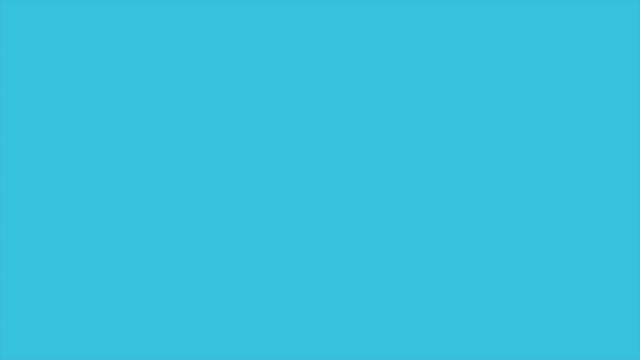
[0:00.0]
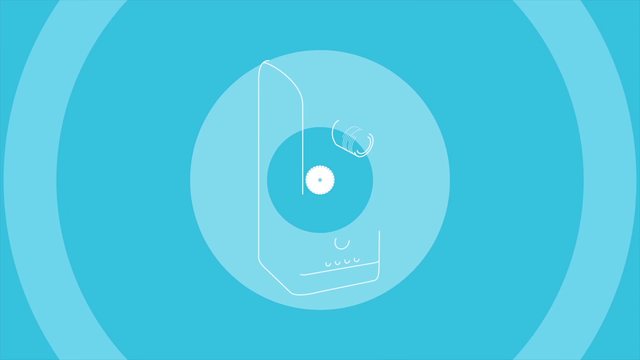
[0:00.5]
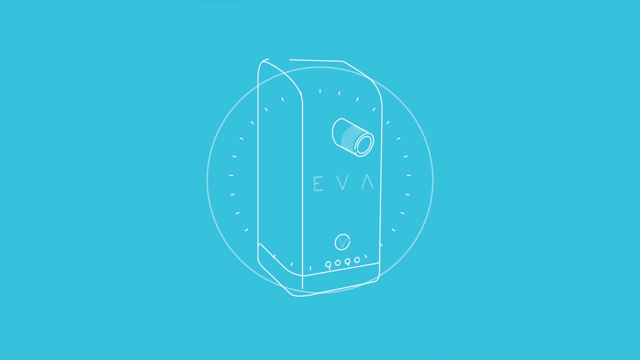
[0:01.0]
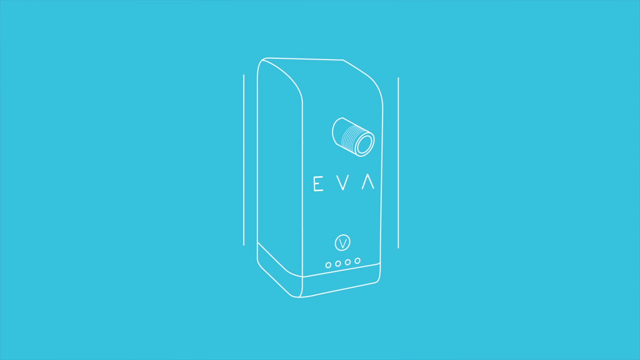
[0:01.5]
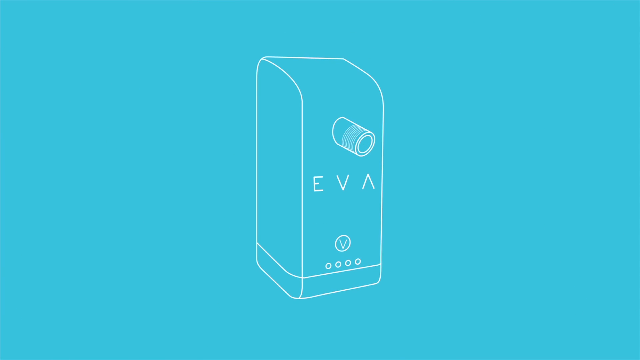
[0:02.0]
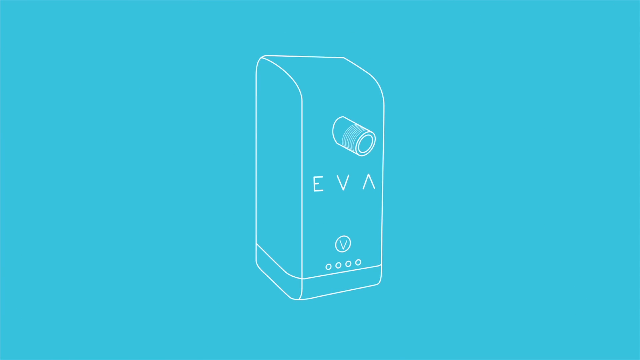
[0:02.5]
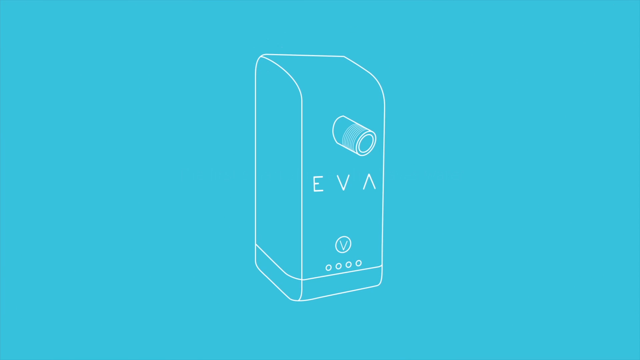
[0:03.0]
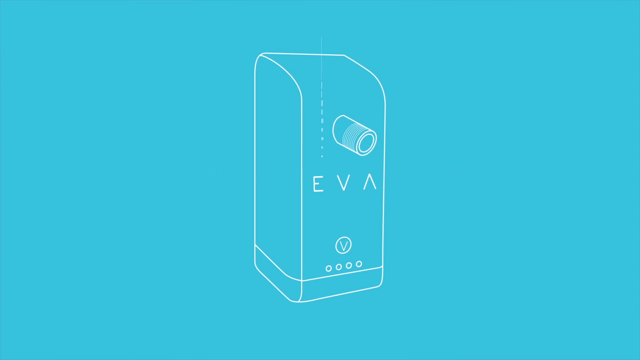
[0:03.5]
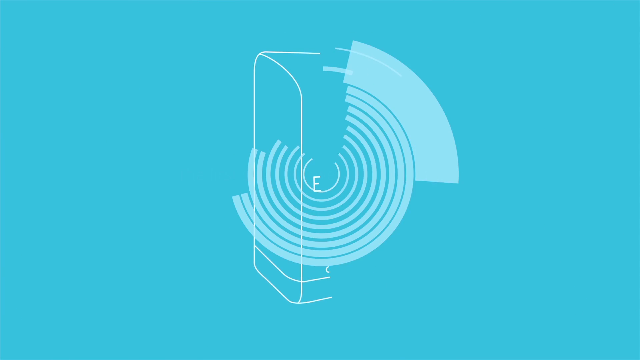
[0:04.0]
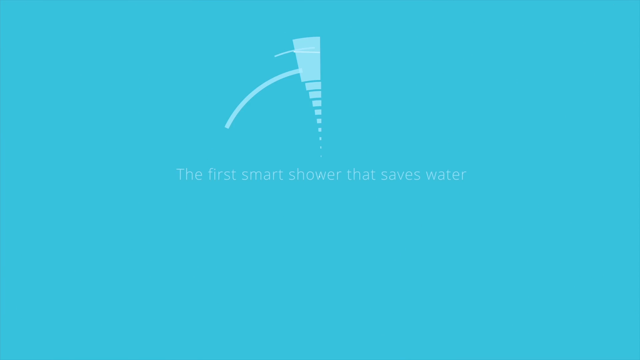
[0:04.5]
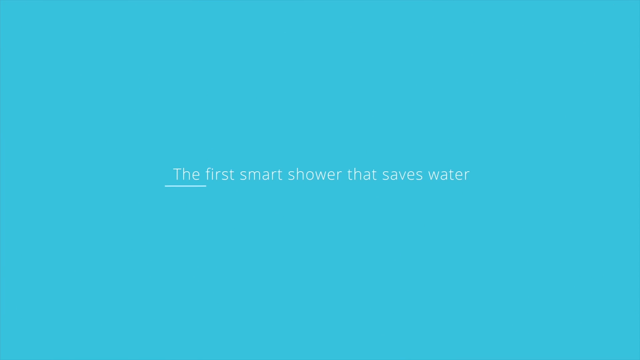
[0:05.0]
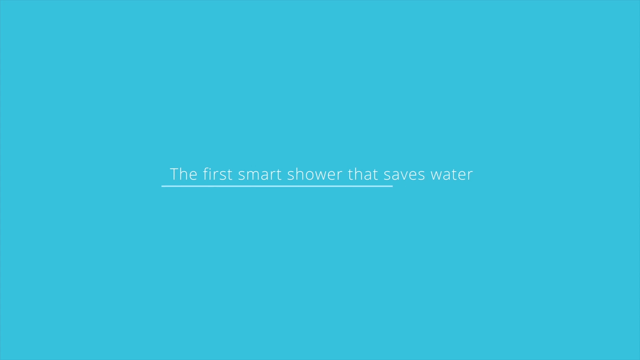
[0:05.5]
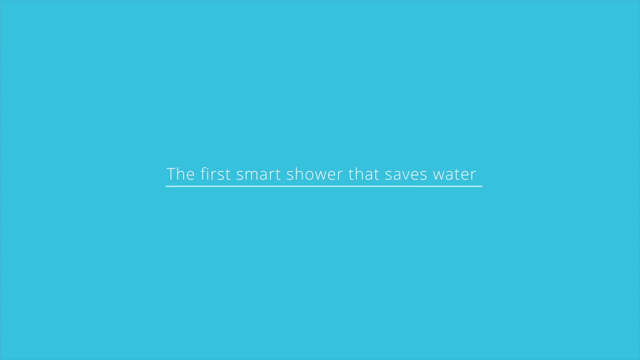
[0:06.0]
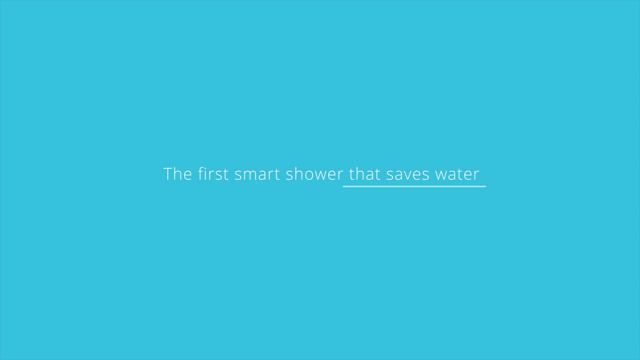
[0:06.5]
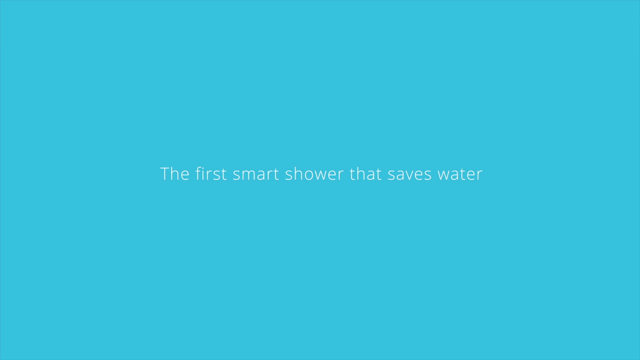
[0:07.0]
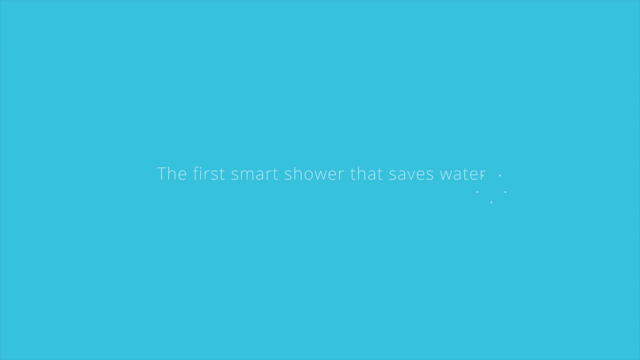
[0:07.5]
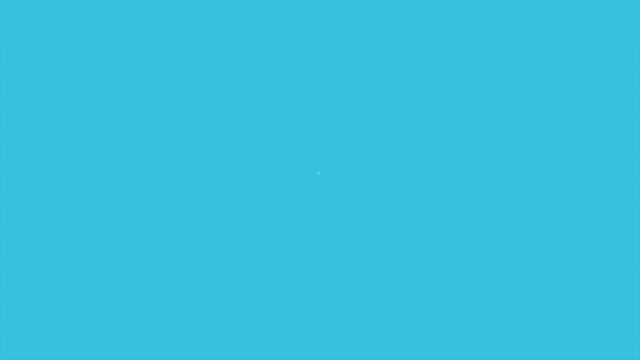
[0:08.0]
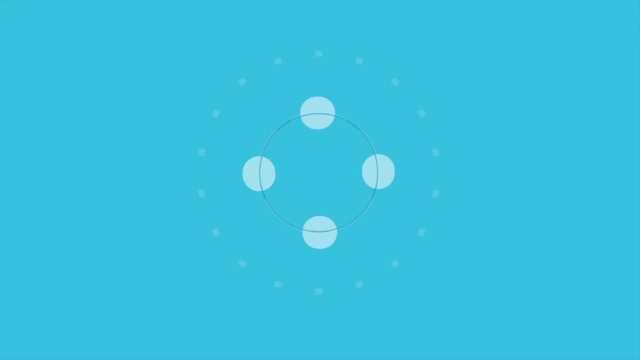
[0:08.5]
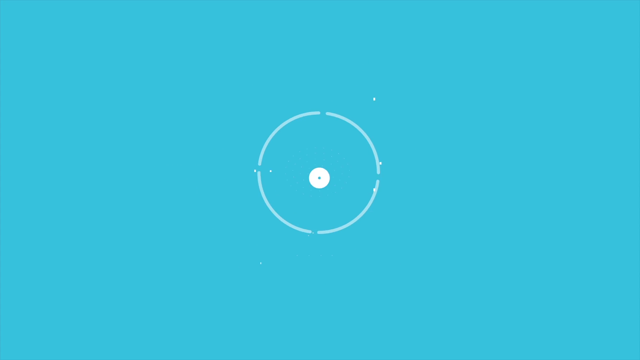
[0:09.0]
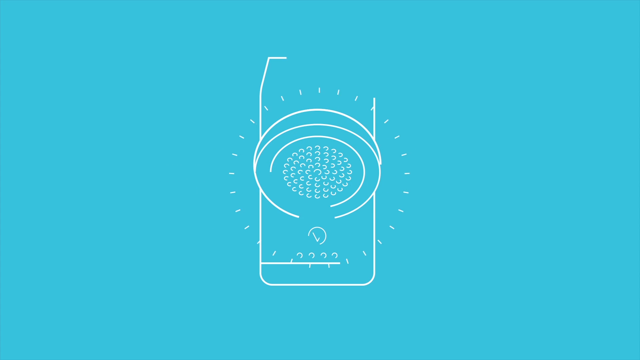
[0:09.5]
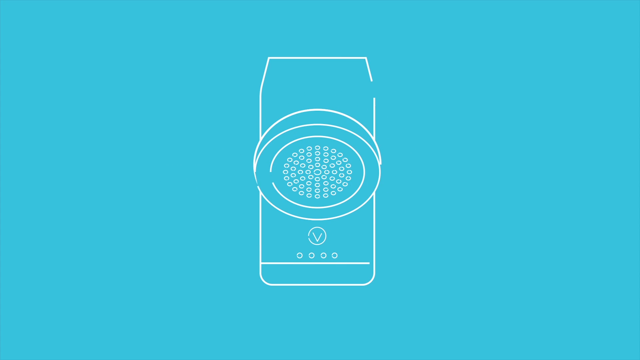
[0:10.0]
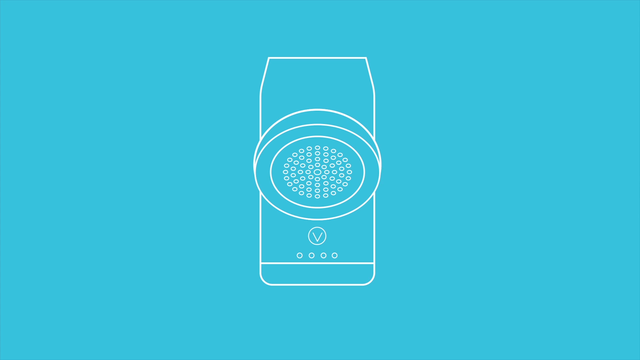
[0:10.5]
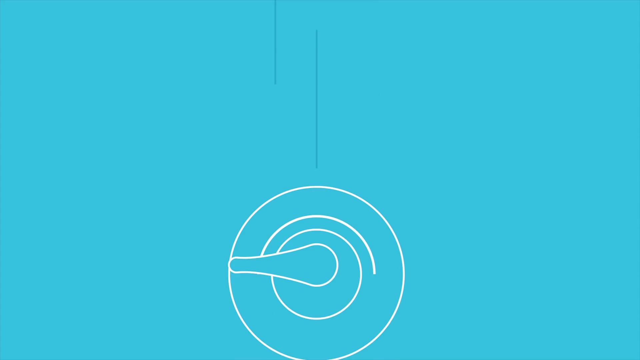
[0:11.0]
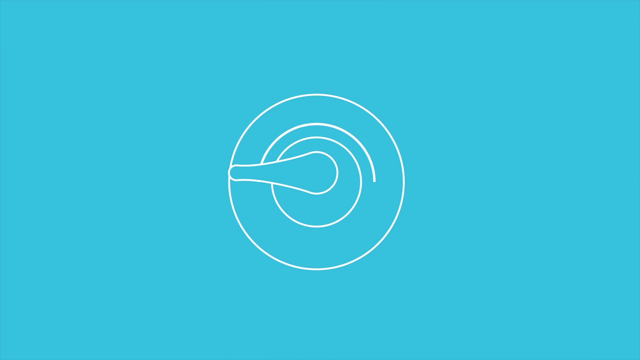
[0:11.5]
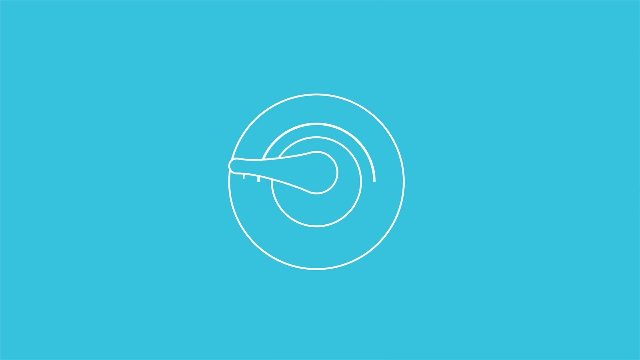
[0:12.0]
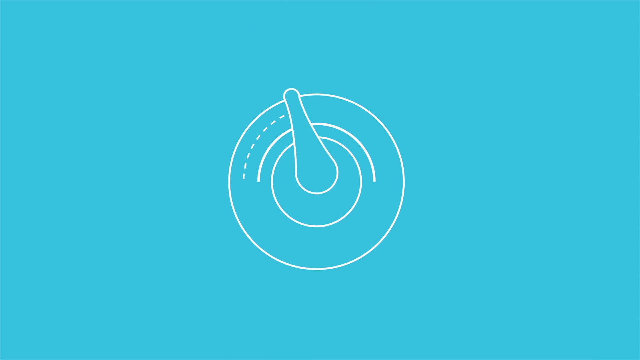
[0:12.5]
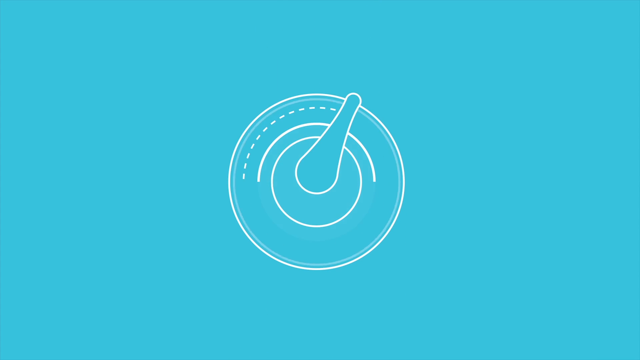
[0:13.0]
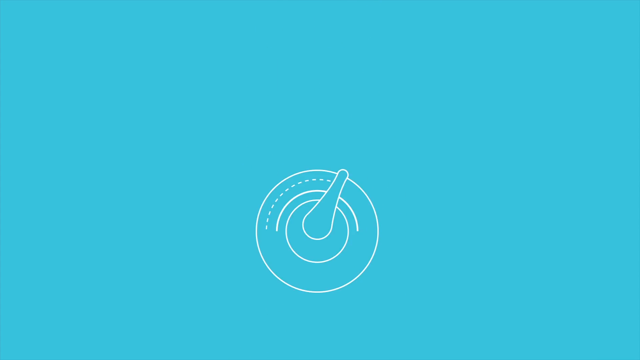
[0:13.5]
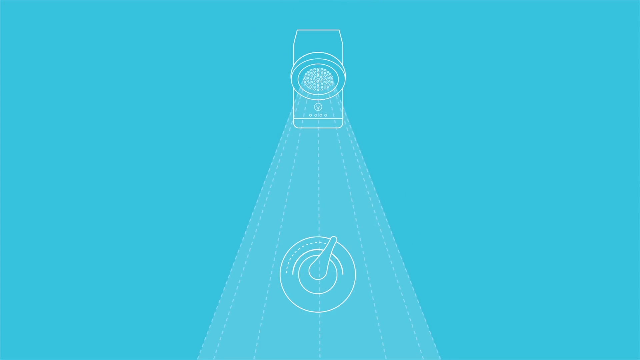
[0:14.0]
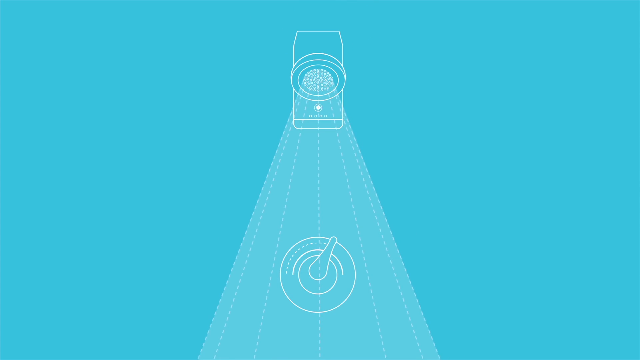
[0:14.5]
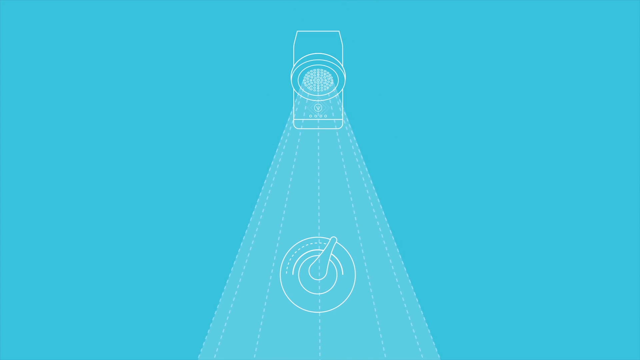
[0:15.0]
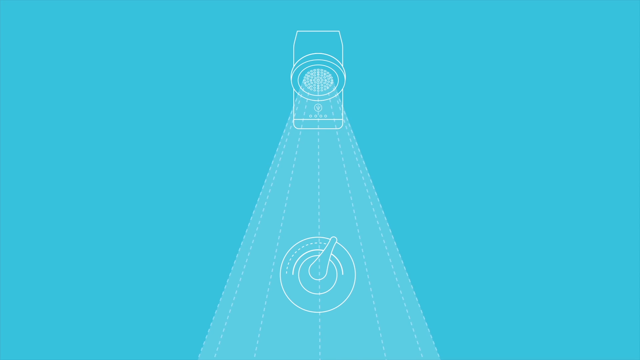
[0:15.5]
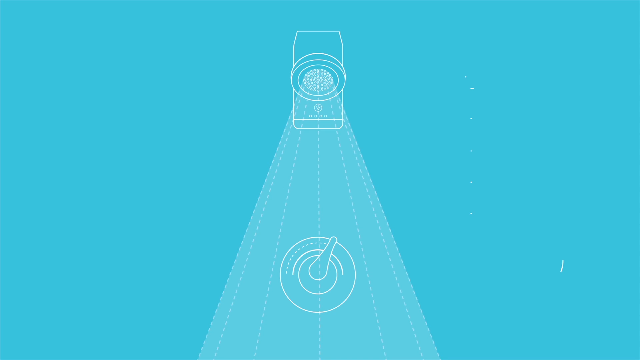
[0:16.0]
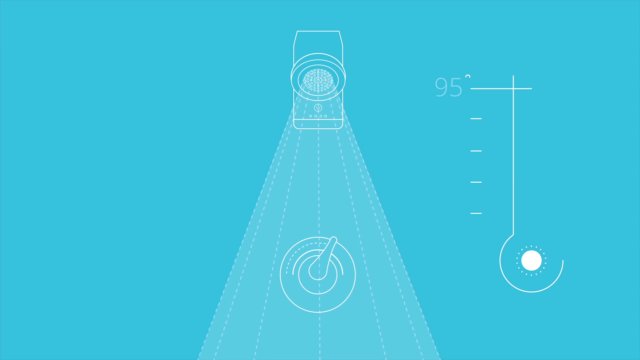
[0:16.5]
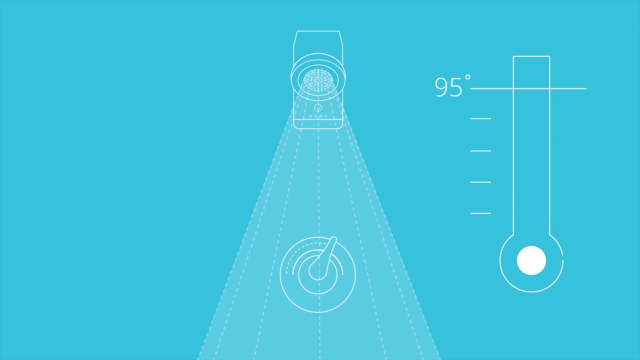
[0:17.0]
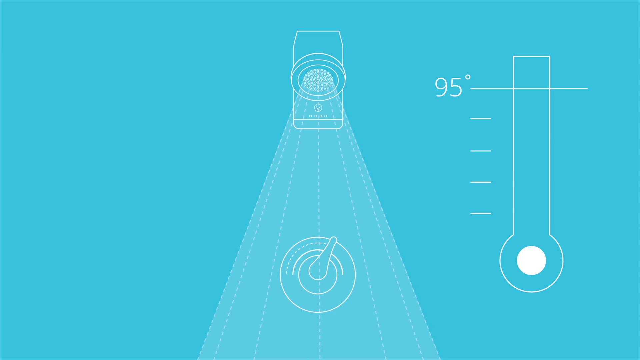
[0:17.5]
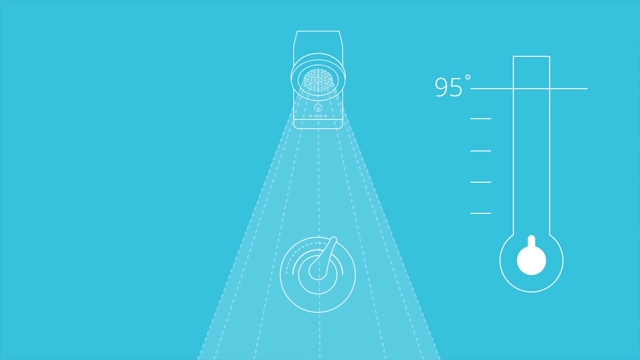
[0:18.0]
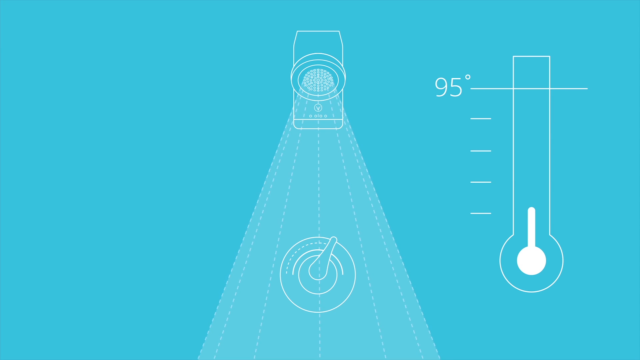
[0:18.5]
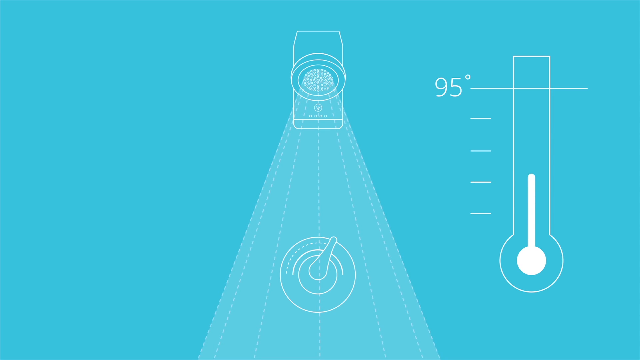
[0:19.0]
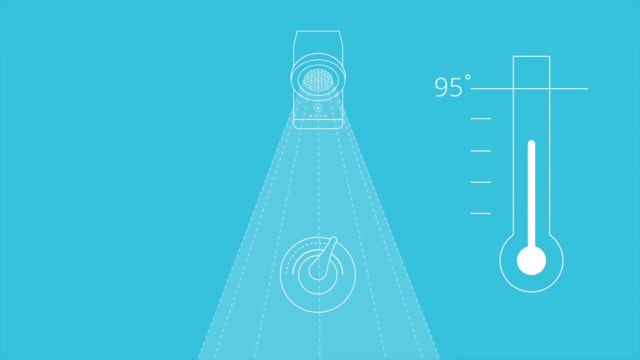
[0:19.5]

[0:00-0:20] The video opens on a sea green background, on which a drawing appears in white. The drawing is of an object with the text "EVA" on it; the object also has a circle containing the letter V, and below this are four small circles. Text then appears reading "The first smart shower that saves water". This text is on white and lasts for a few seconds before it disappears. Next comes a diagram of an object that seems somewhat like a shower head, also bearing the letter V and four small round circles. That image disappears, and a diagram of a dial appears; the dial is moved in the clockwise direction. Following this, what appears to be water exits the shower head. A thermometer then appears on the right-hand side, with a maximum temperature of 95 degrees.